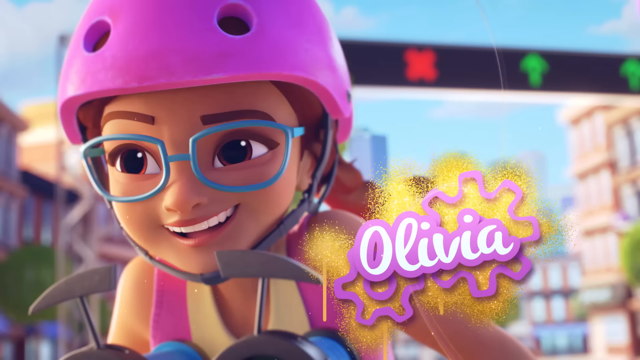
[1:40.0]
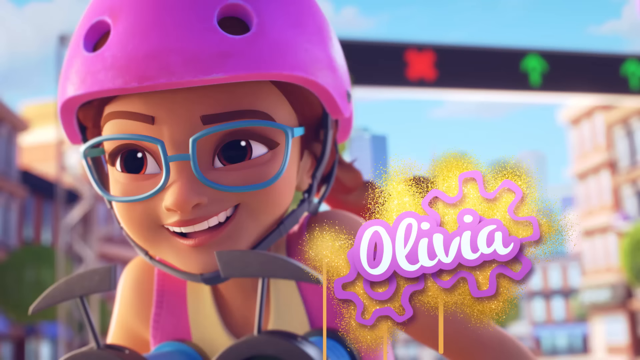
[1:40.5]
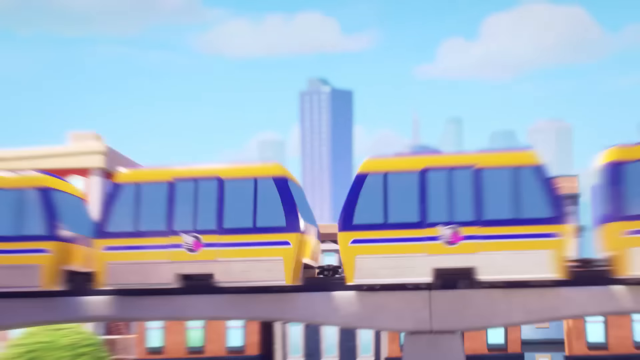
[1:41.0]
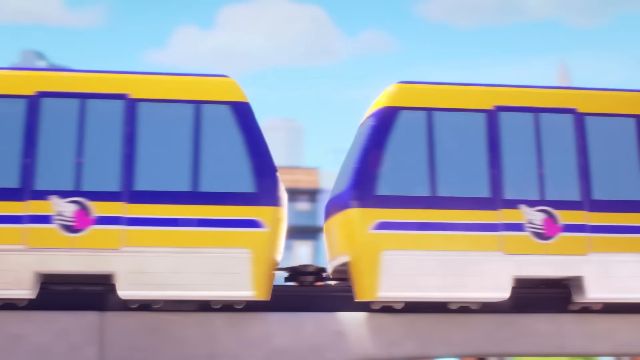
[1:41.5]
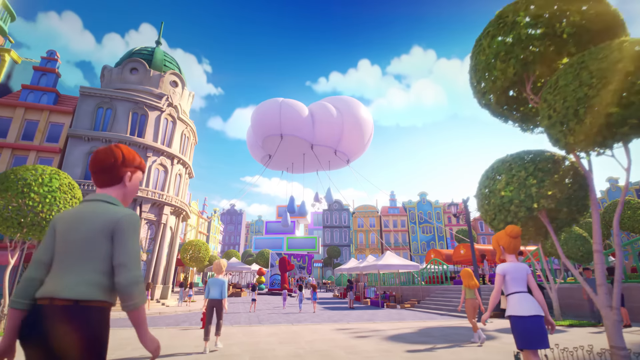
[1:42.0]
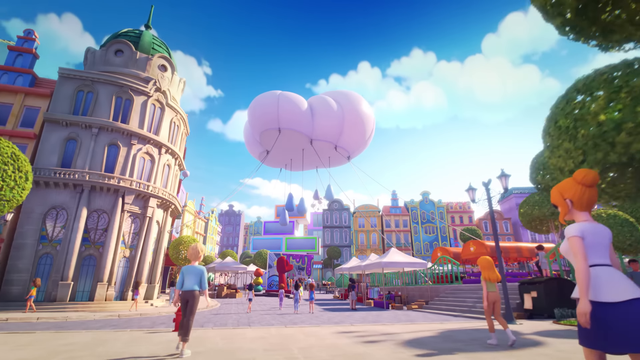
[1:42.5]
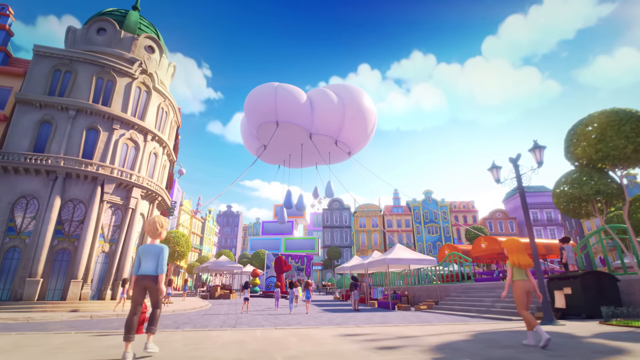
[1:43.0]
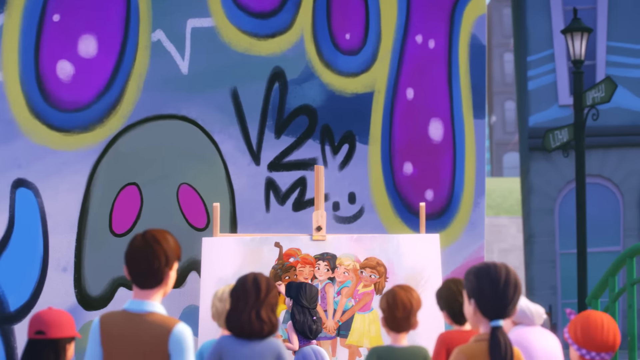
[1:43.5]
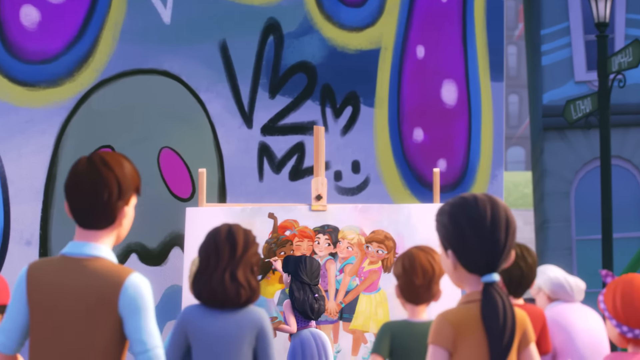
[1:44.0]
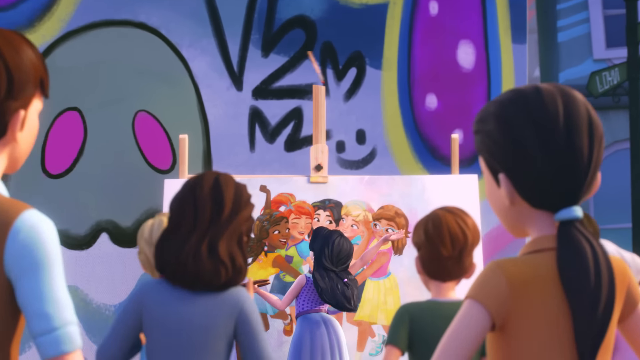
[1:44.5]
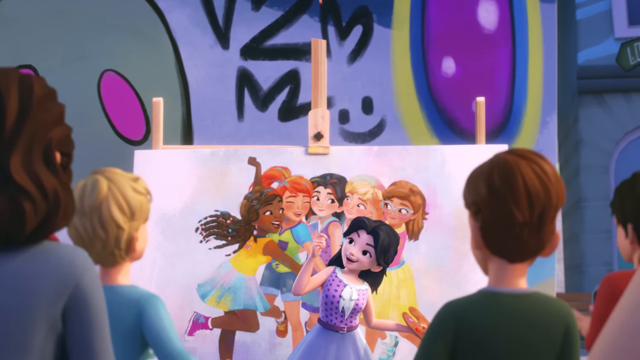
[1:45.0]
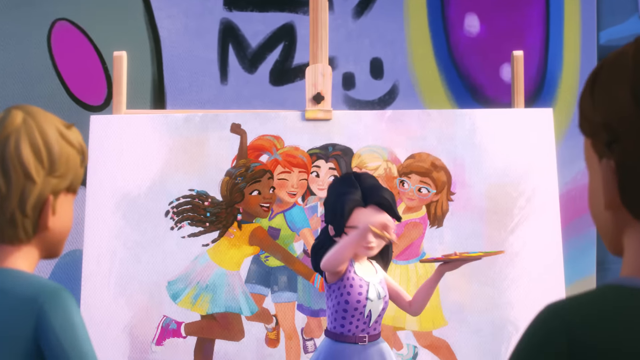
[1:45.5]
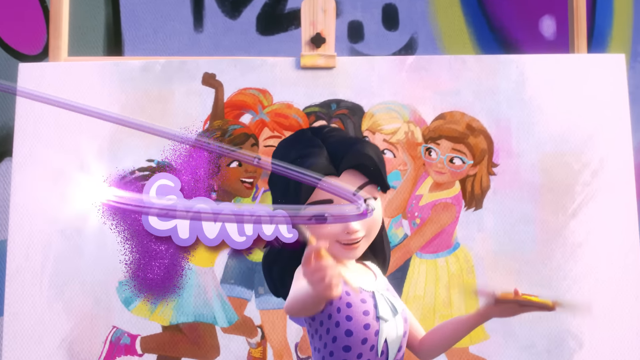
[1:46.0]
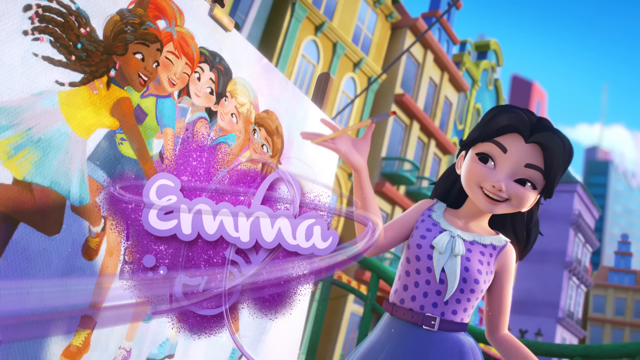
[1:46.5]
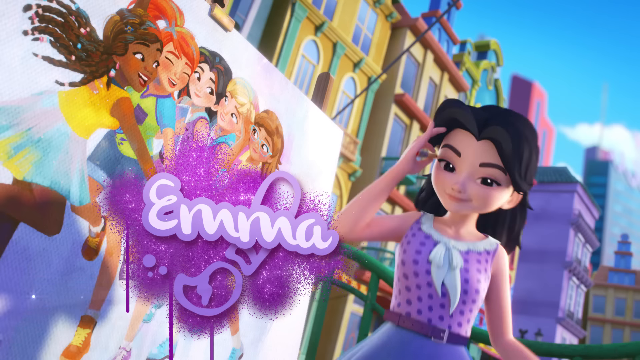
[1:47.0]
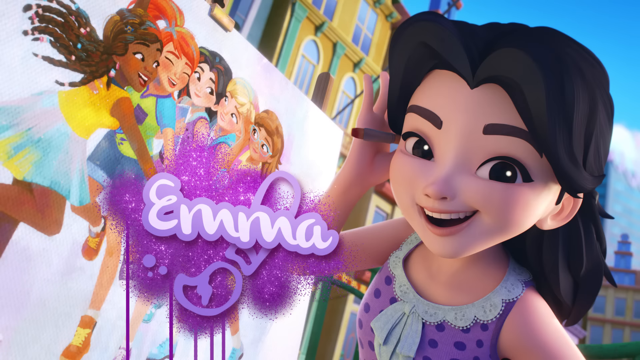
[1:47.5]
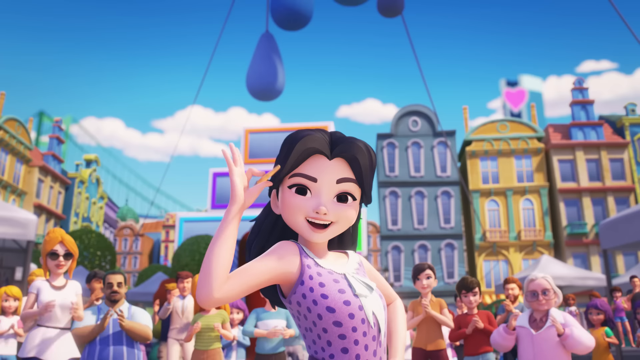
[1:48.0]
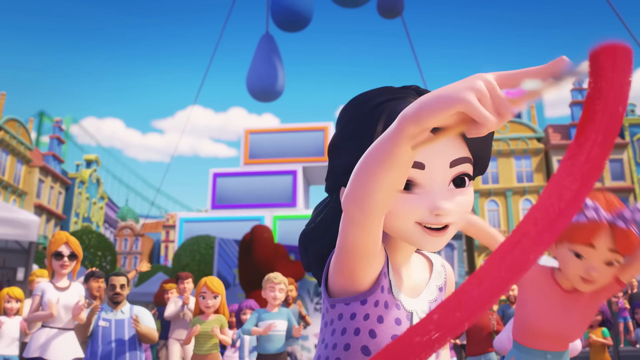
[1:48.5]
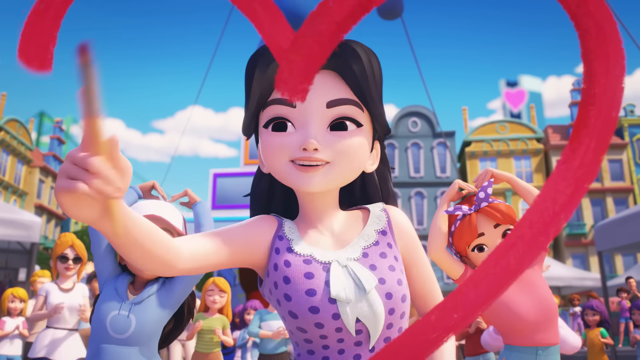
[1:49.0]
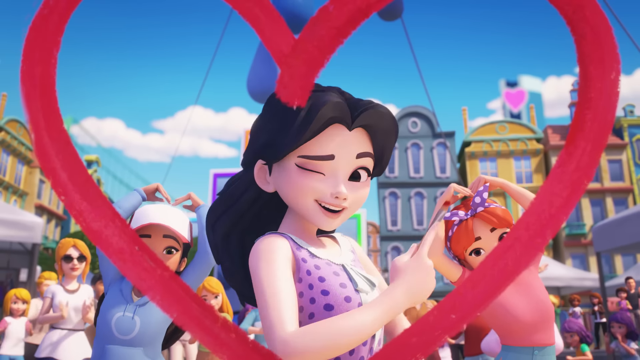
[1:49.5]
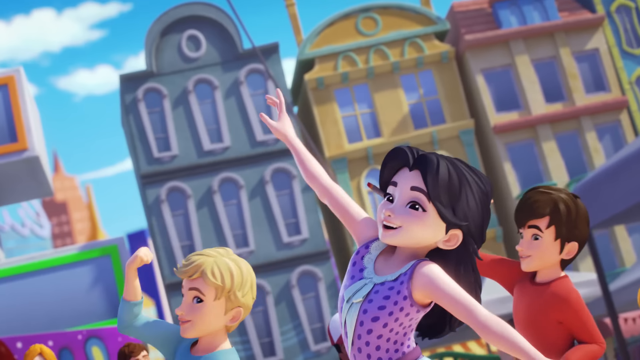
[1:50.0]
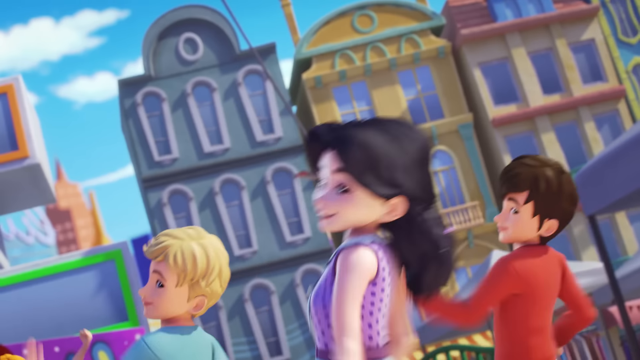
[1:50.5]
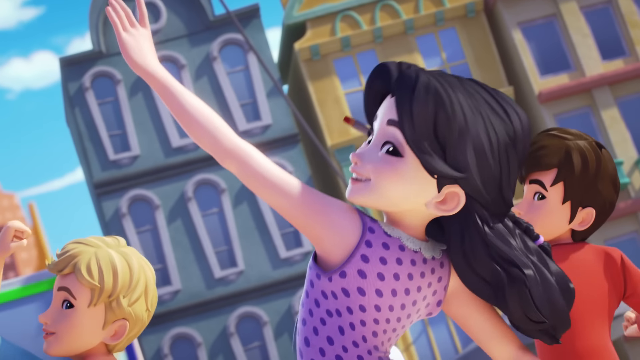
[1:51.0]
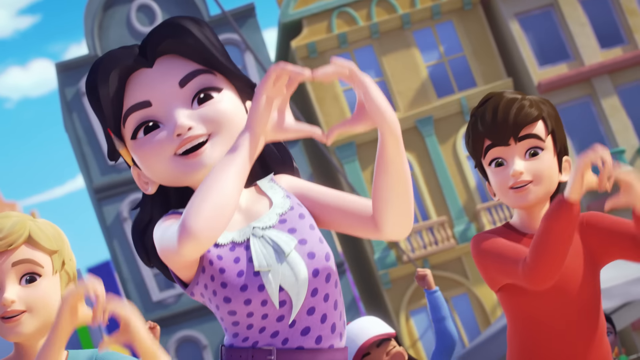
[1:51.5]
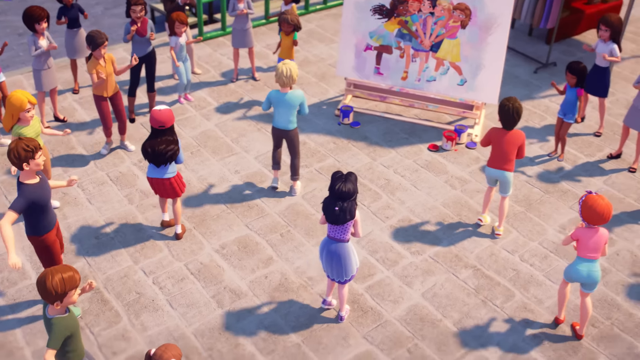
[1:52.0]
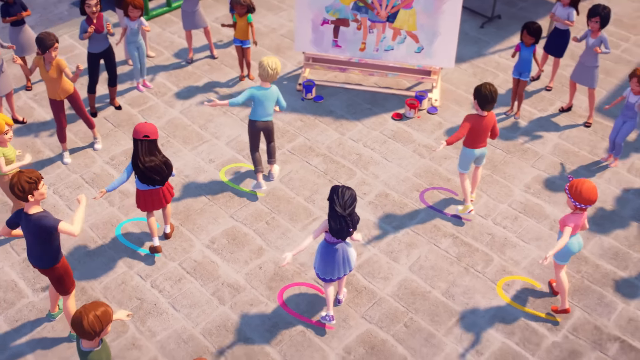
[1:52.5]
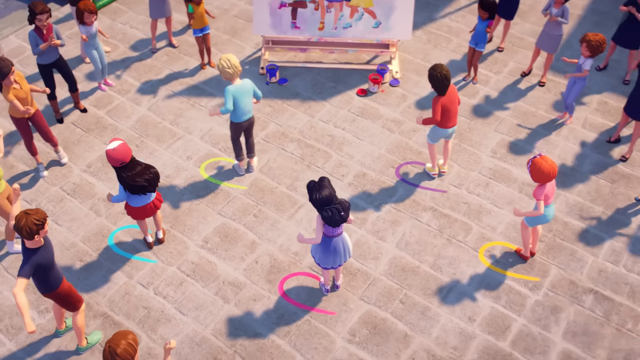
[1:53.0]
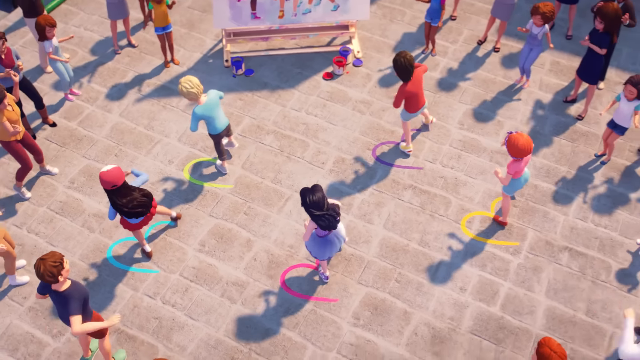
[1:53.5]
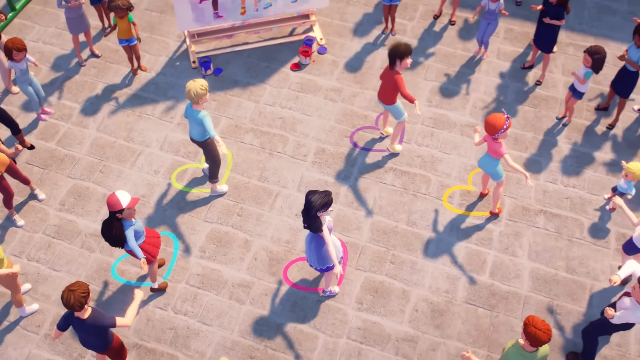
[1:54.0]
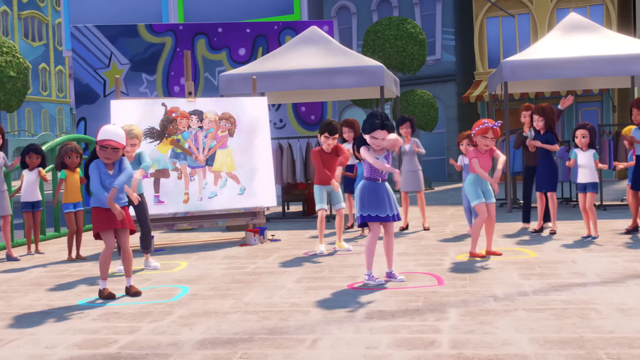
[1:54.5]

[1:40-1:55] The late friend's name is shown as Olivia, and she is out of the house with her robot and gerbil. The train is still going, apparently not yet at its stop. Another girl is painting in the square with a paintbrush; she paints happy things like hearts and all of the friends just introduced. Happy with her painting, she breaks into song and dance, everybody else joins in, and they tap dance little hearts onto the ground with their feet.